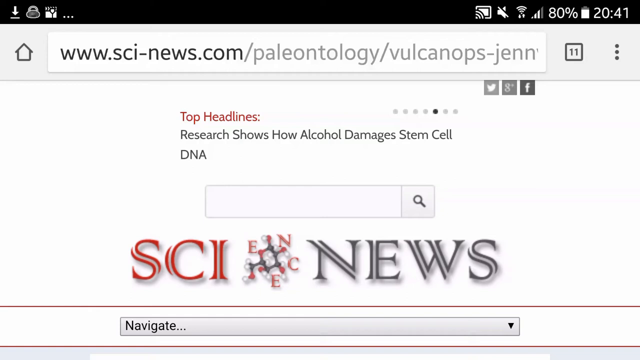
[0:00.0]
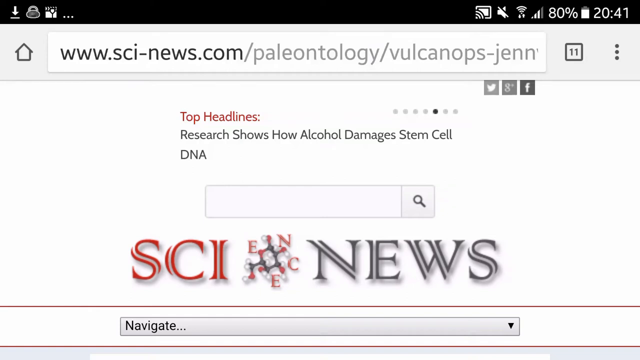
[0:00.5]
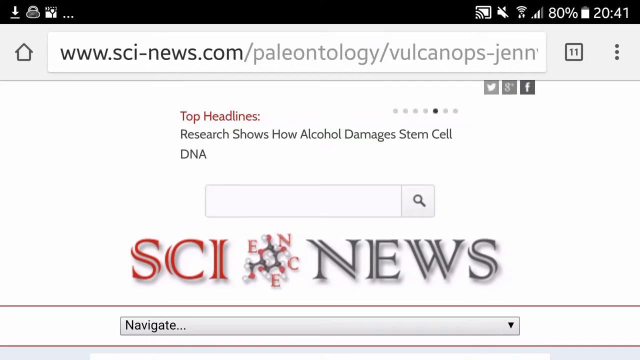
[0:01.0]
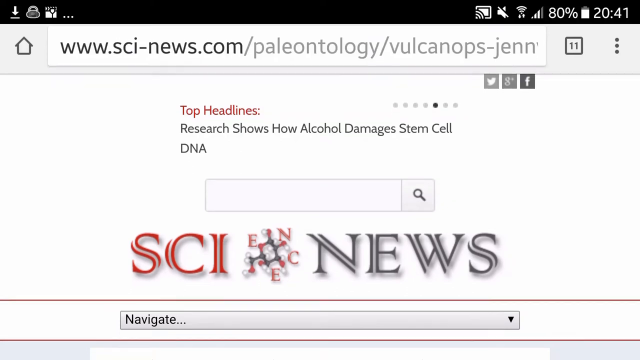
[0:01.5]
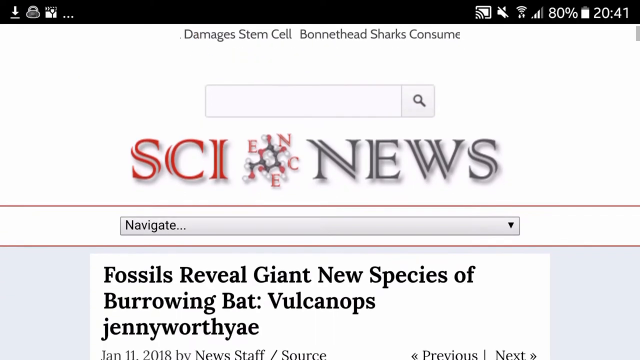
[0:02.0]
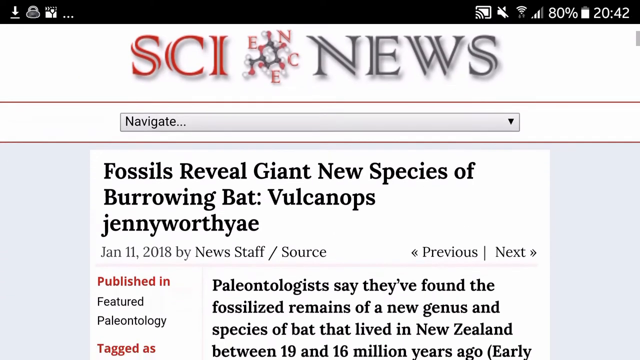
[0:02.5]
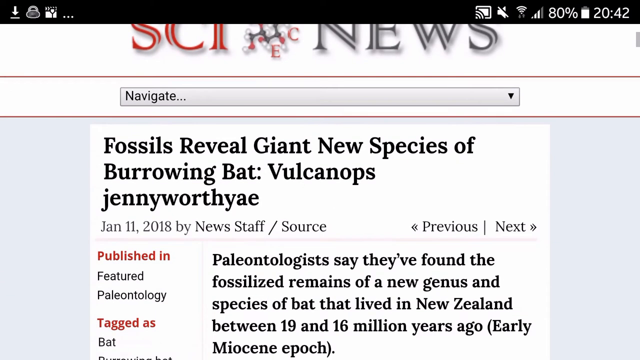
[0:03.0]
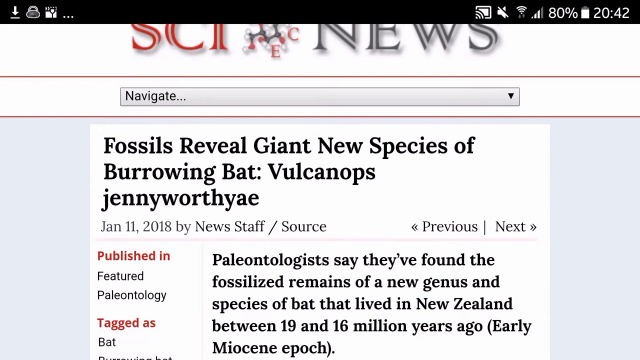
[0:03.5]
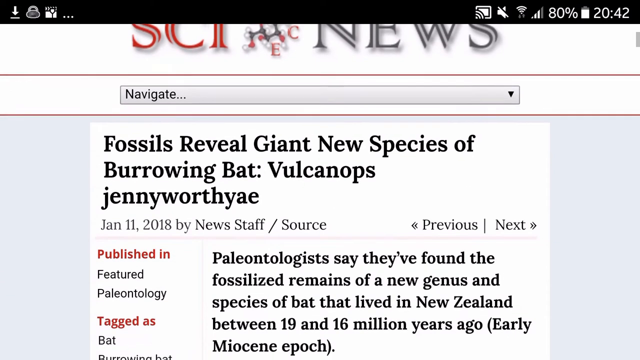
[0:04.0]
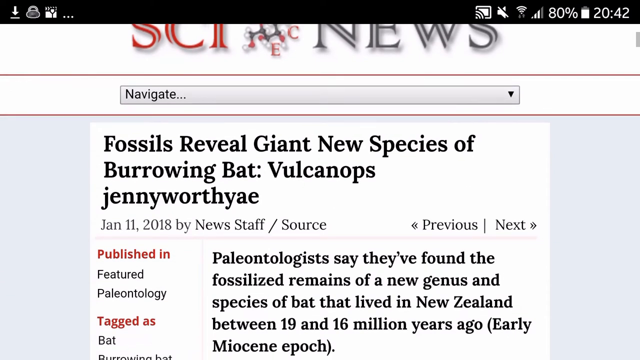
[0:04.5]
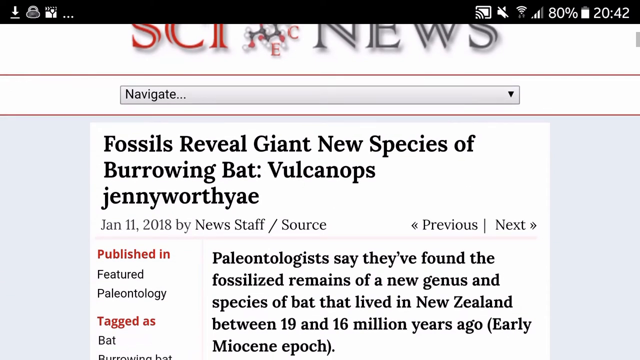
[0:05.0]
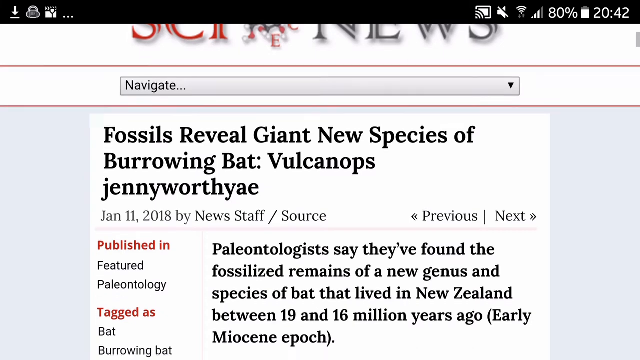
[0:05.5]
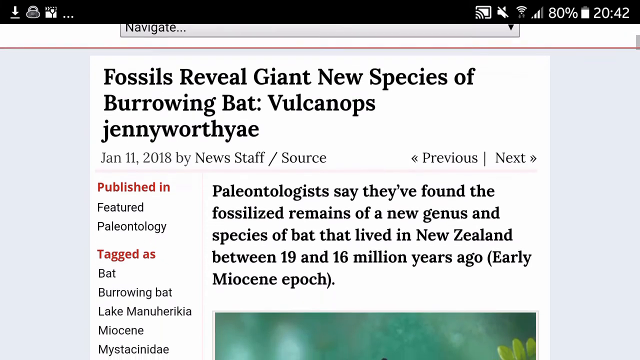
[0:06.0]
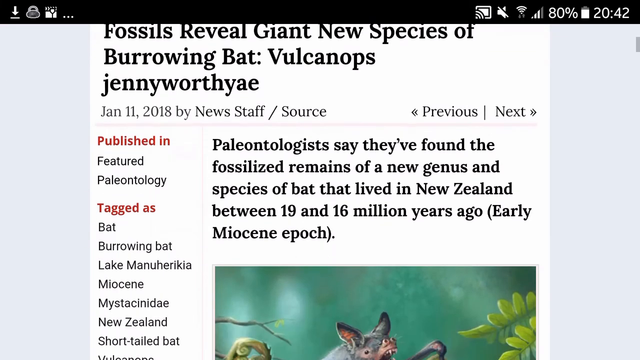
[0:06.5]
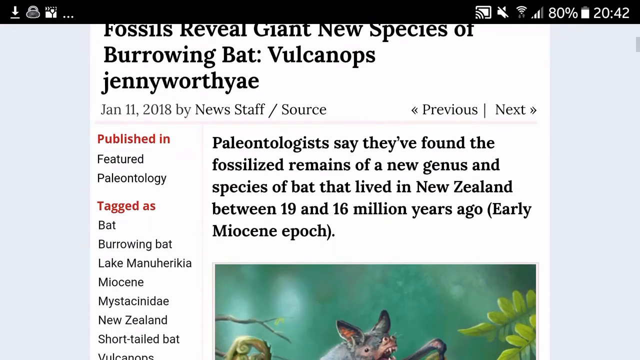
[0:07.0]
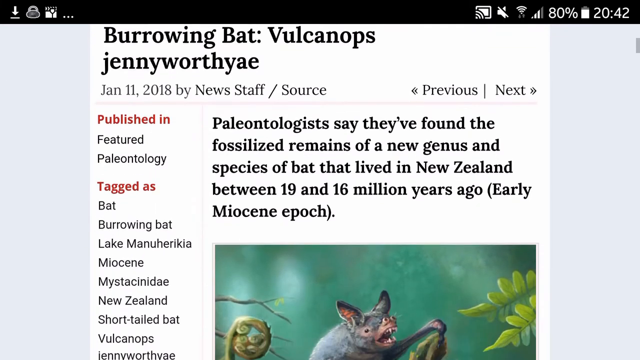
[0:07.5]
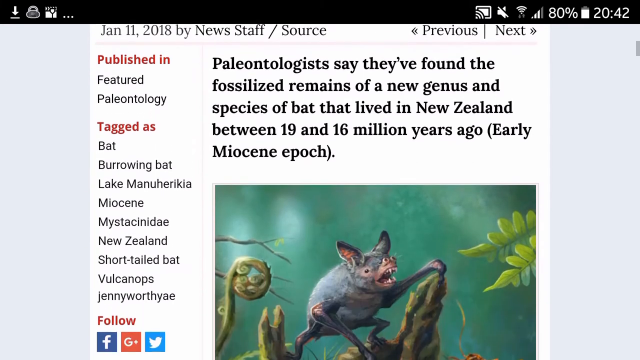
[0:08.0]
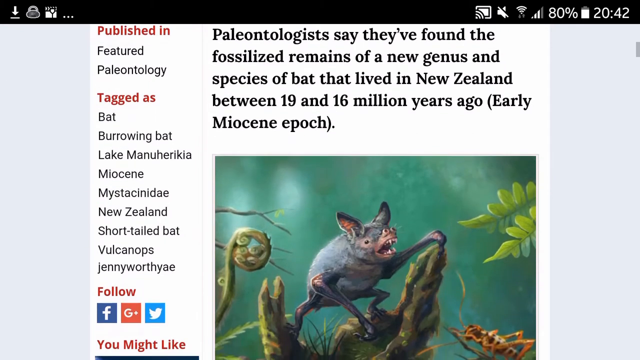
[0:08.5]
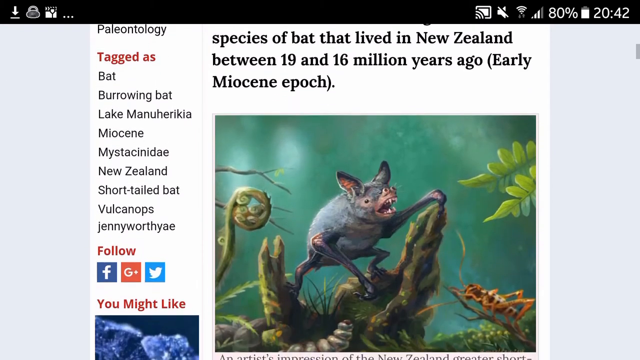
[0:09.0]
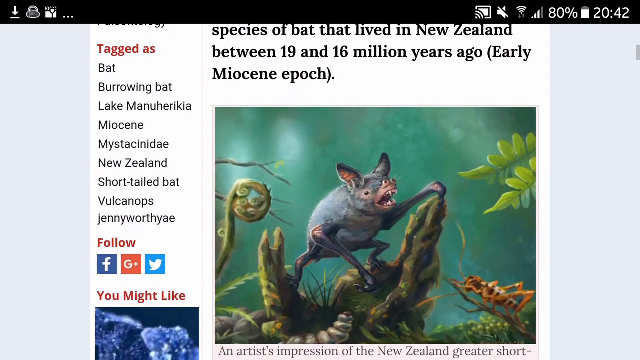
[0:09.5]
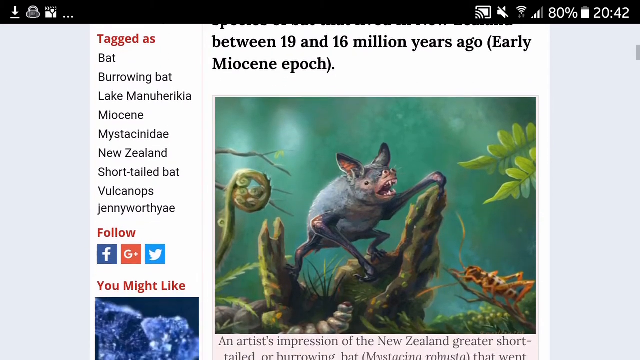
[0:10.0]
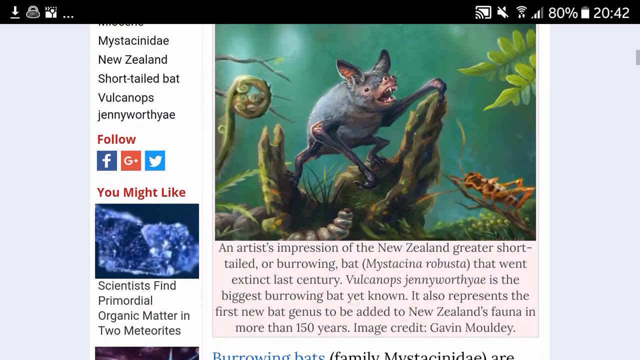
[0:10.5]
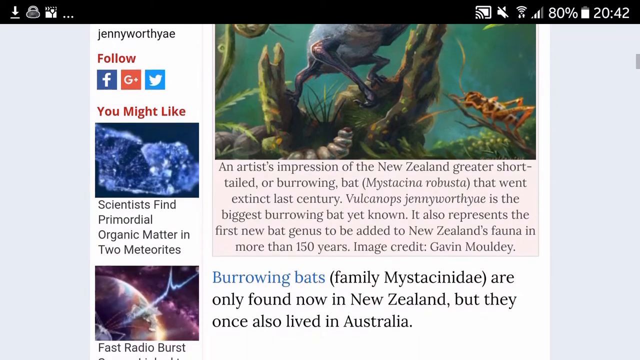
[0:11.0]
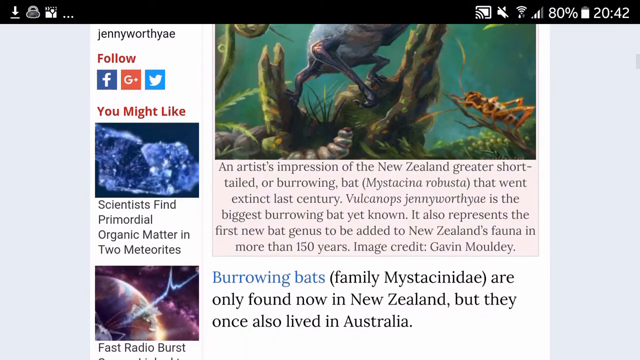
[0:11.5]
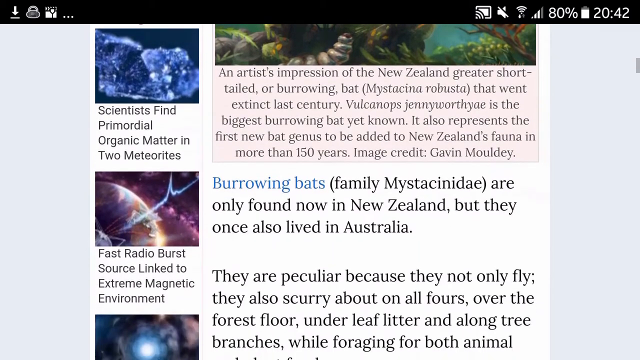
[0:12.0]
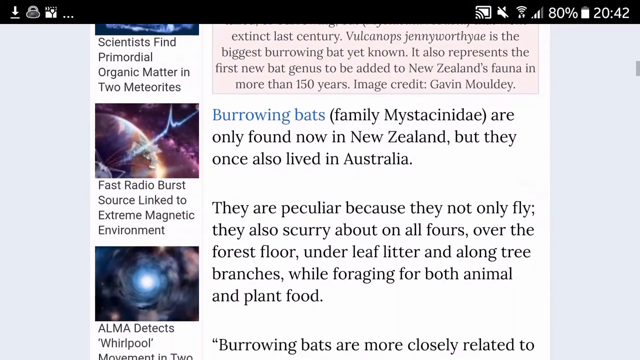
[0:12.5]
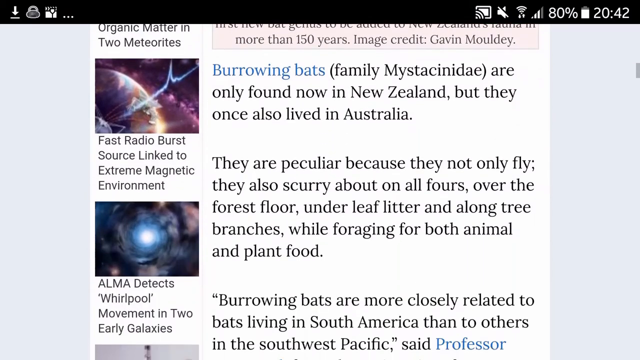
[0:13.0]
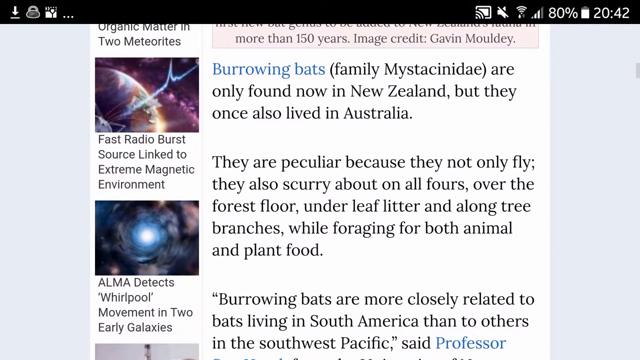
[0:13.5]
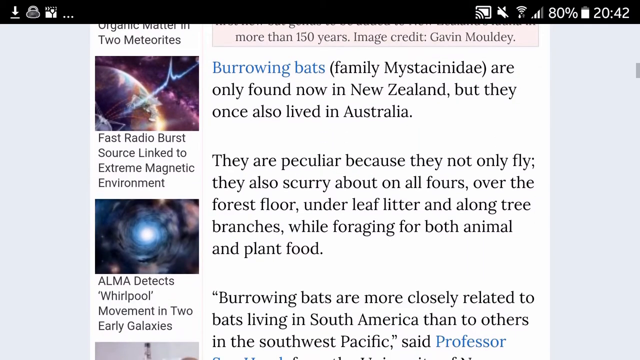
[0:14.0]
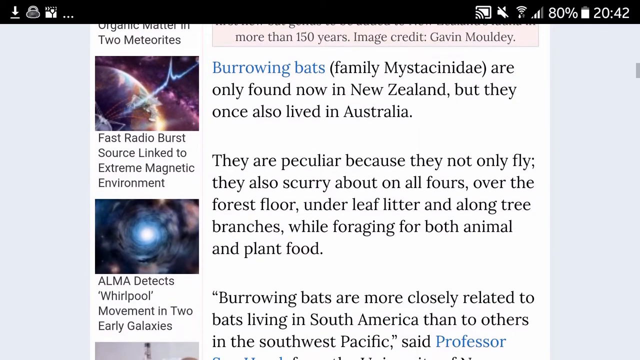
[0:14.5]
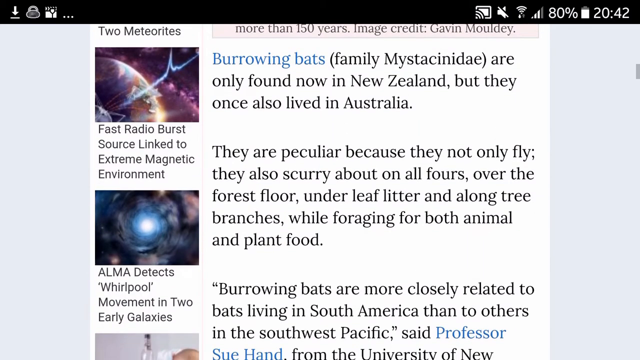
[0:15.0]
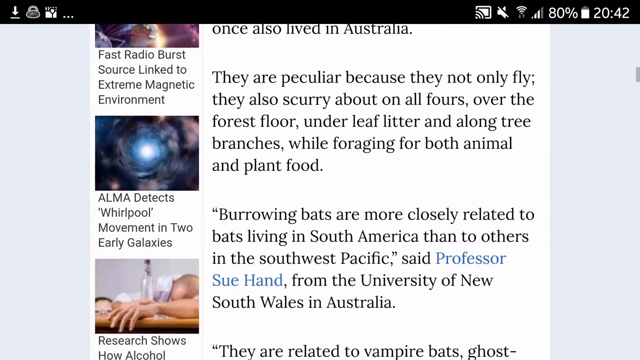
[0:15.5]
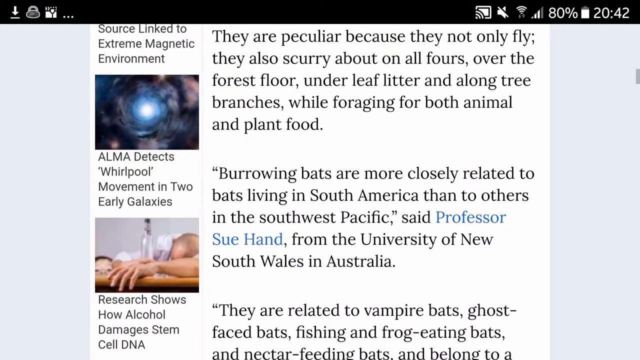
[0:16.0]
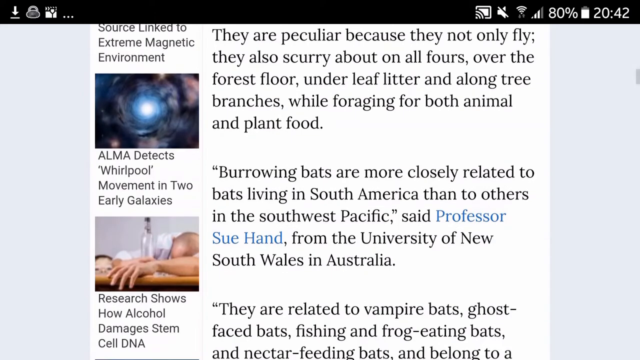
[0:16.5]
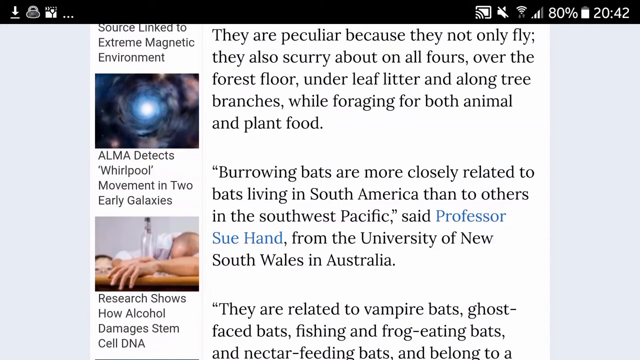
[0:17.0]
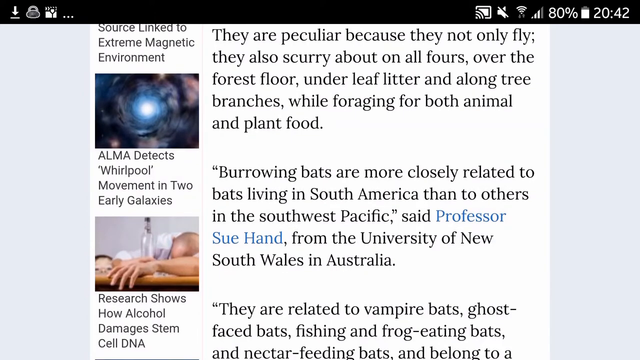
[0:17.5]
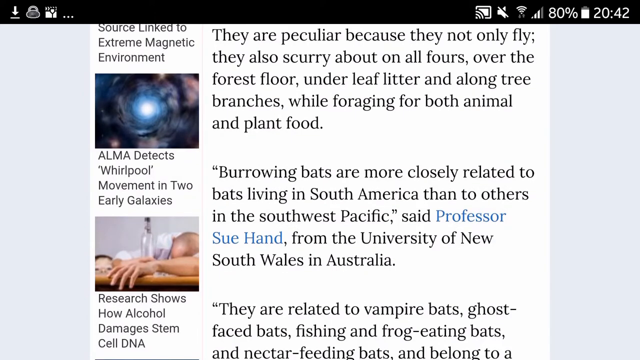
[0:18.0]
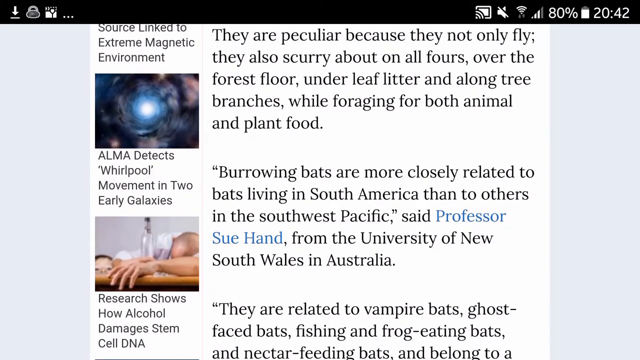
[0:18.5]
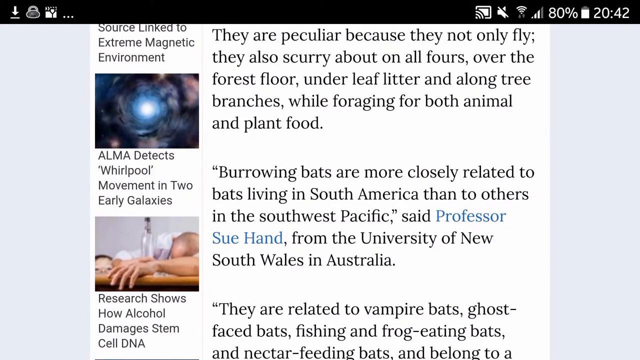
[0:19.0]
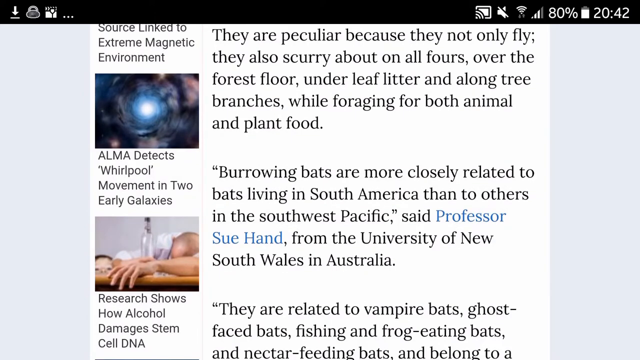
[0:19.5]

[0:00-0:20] A computer screen shows a web page at www.scinews.com, which looks like it could be a scientific news page. The top headlines on the page include "research shows how alcohol damages stem cell DNA." The page scrolls down to the headline "fossils revealed giant new species of burrowing bat Vulcanops jennyworthyae." Further down is an animated, cartoon-like image of a burrowing bat in its natural habitat, with a cricket in the lower right corner of the picture. Scrolling on, the article text says that burrowing bats are now found only in New Zealand but once also lived in Australia, and that they are peculiar because they not only fly but also scurry about on all four legs. The screen keeps scrolling down through more information about the bats.